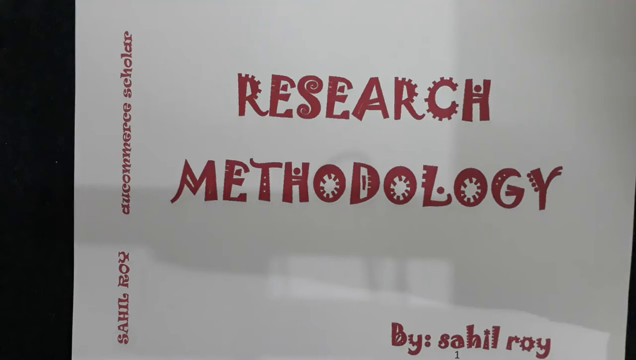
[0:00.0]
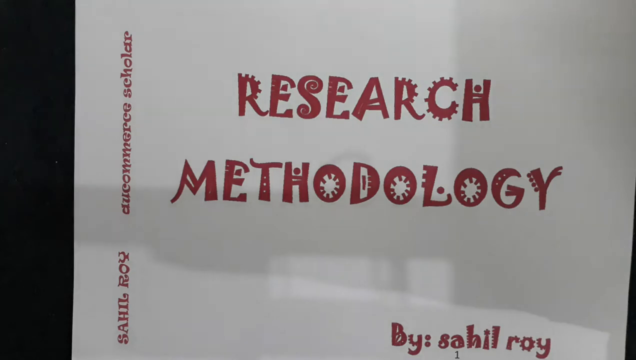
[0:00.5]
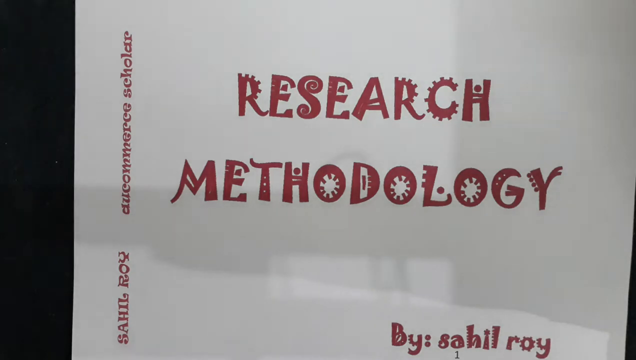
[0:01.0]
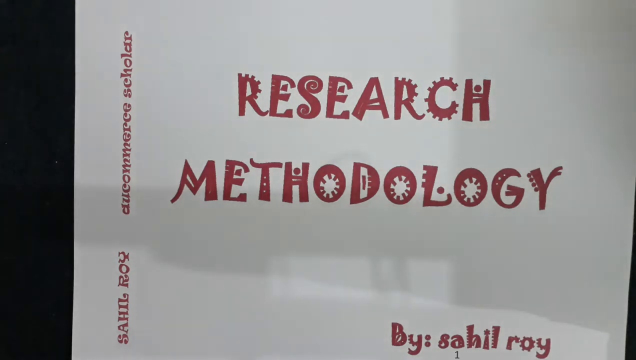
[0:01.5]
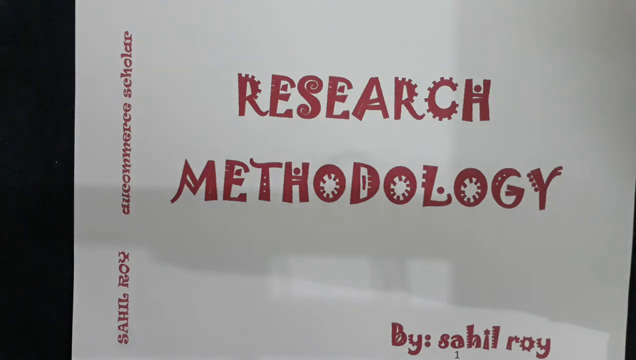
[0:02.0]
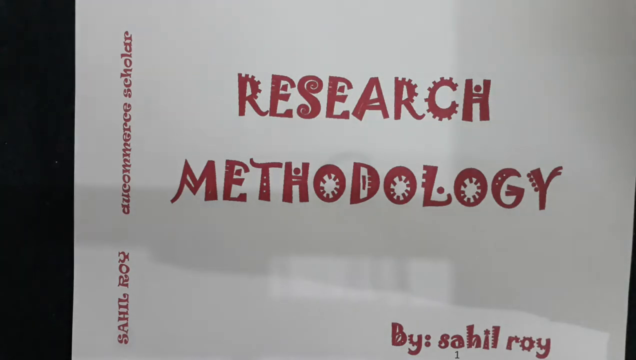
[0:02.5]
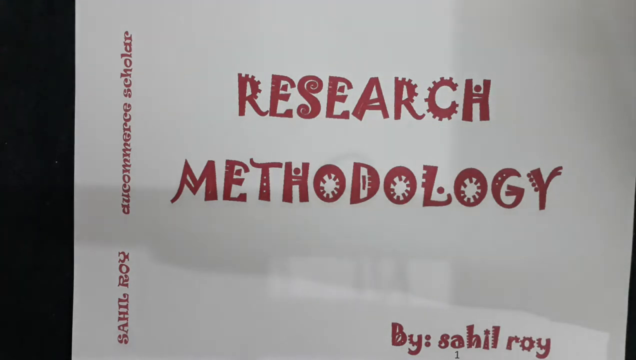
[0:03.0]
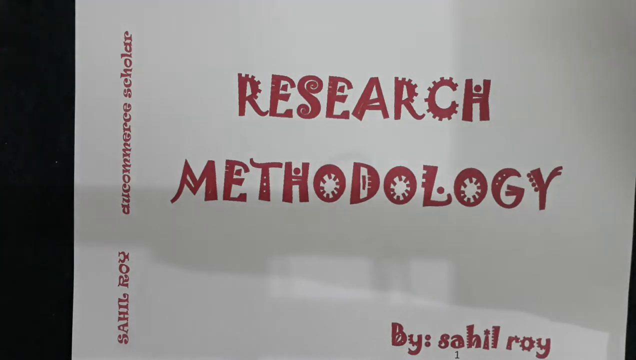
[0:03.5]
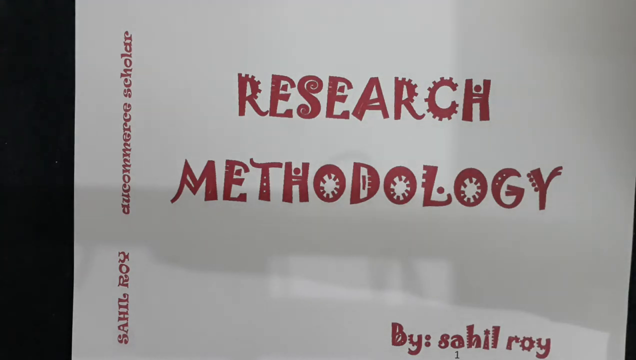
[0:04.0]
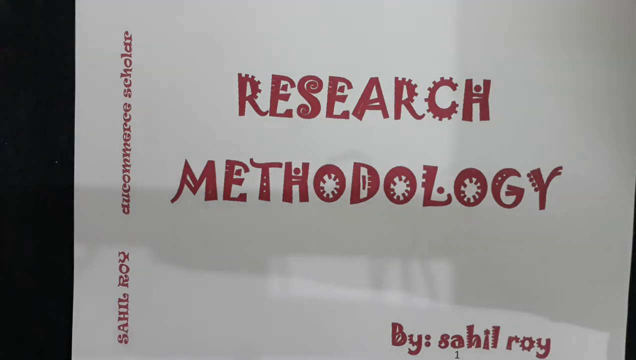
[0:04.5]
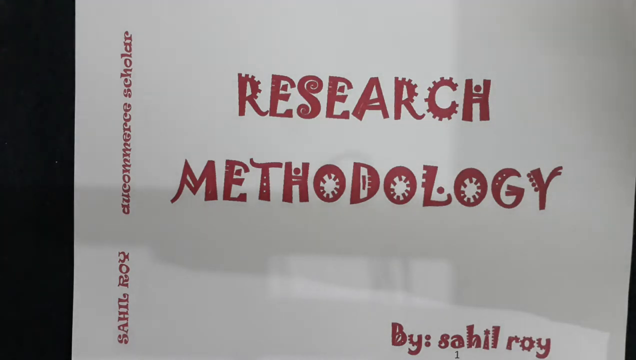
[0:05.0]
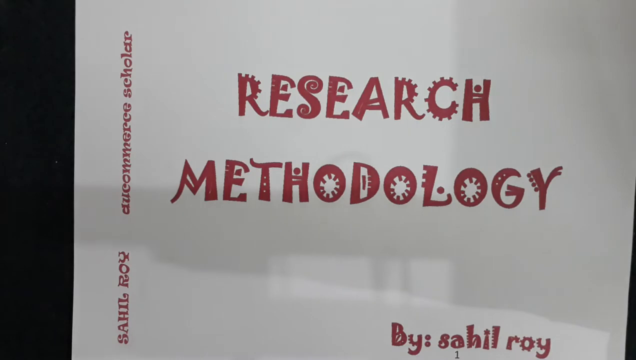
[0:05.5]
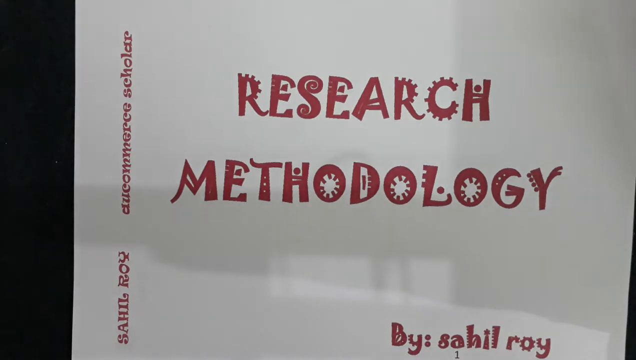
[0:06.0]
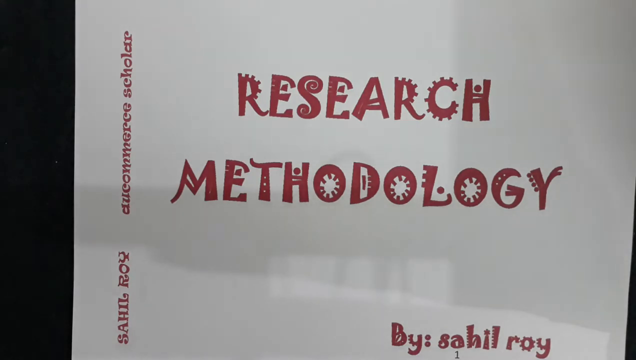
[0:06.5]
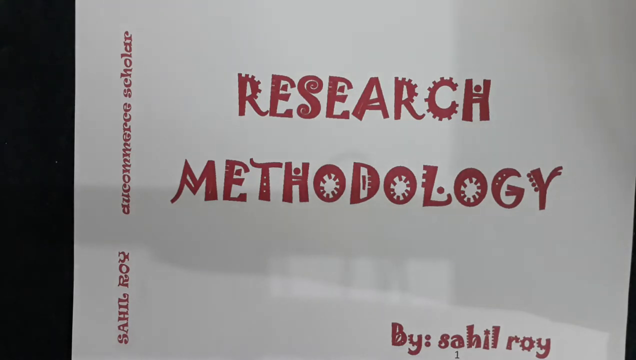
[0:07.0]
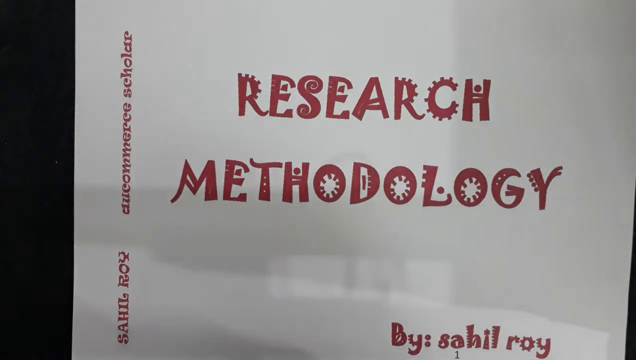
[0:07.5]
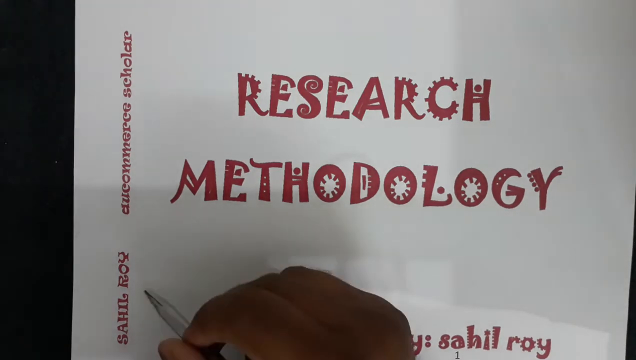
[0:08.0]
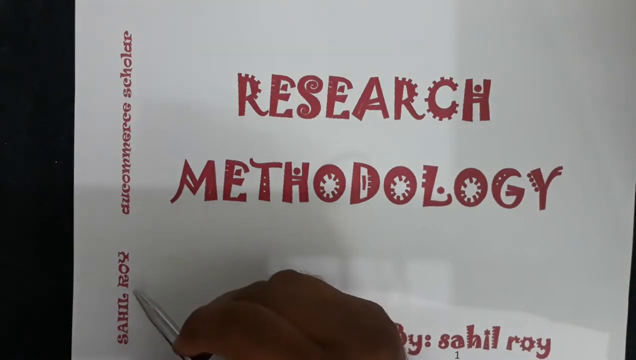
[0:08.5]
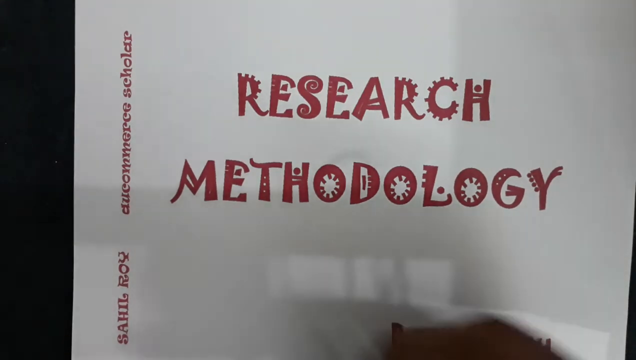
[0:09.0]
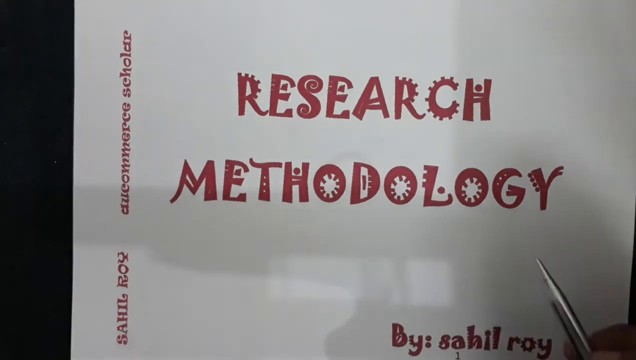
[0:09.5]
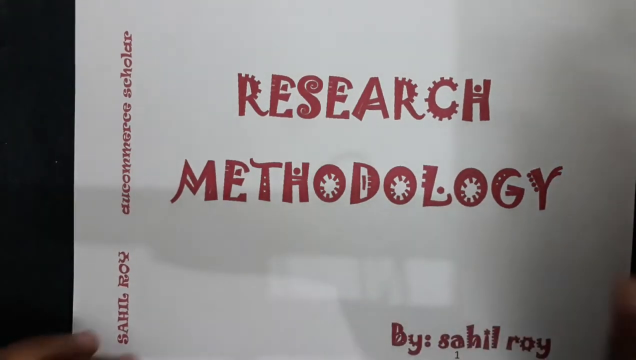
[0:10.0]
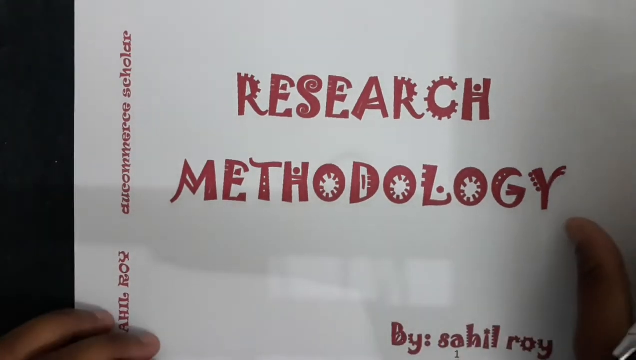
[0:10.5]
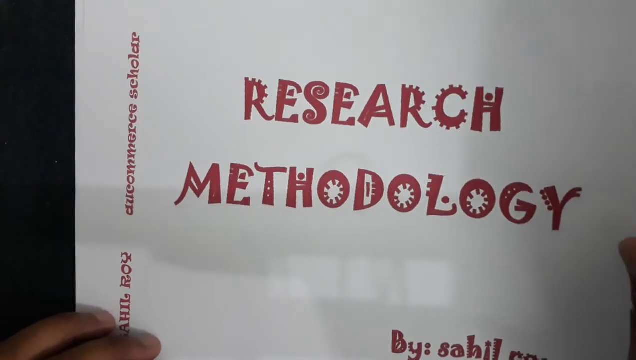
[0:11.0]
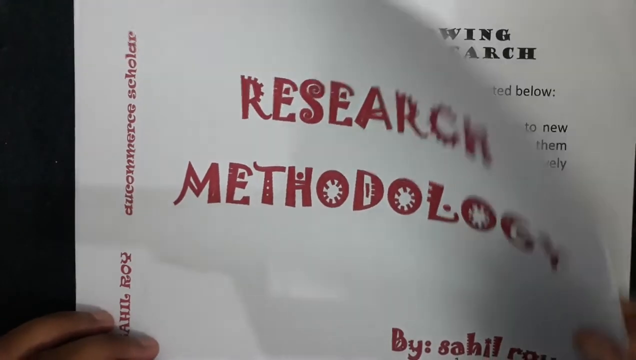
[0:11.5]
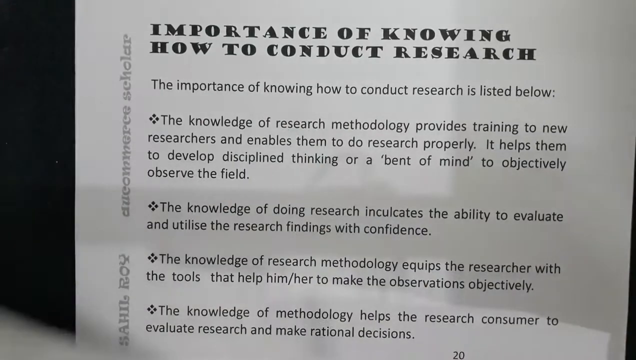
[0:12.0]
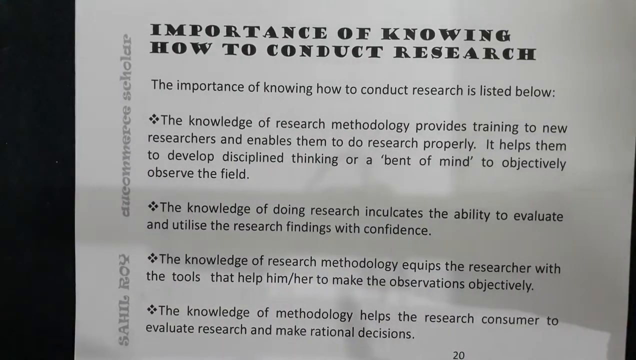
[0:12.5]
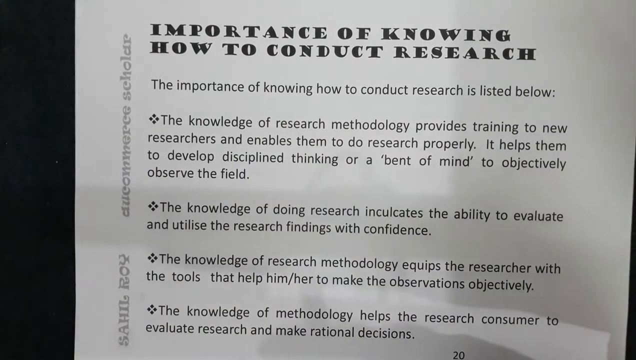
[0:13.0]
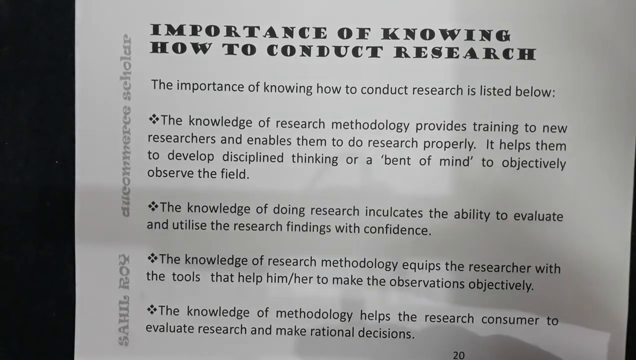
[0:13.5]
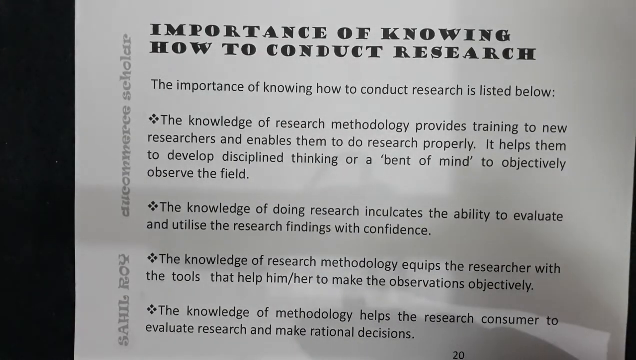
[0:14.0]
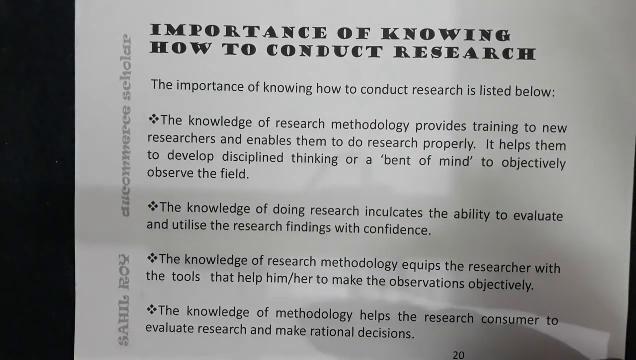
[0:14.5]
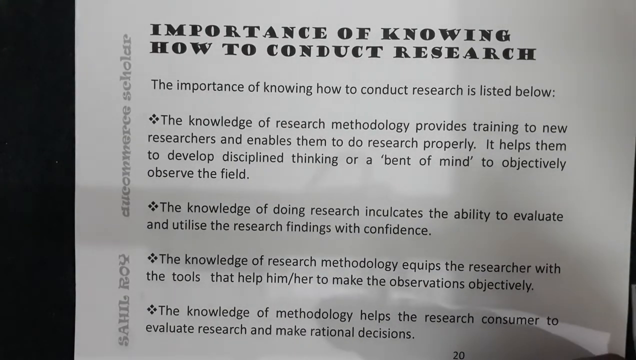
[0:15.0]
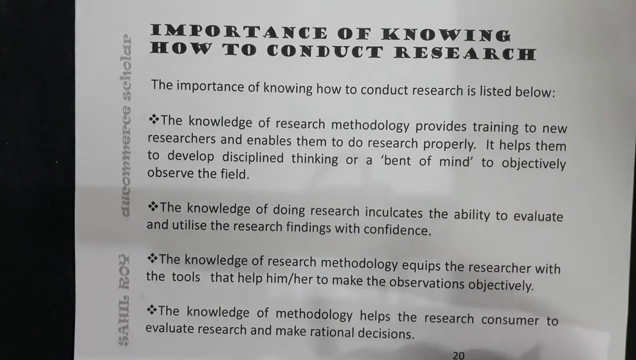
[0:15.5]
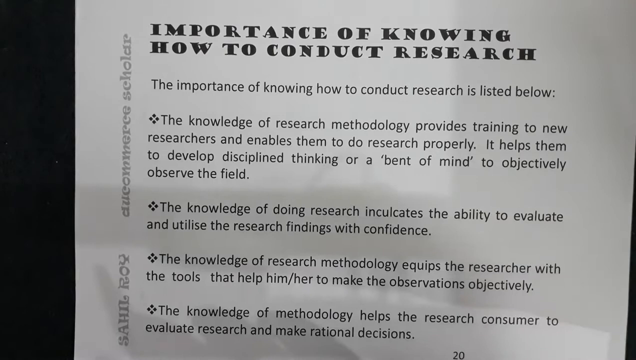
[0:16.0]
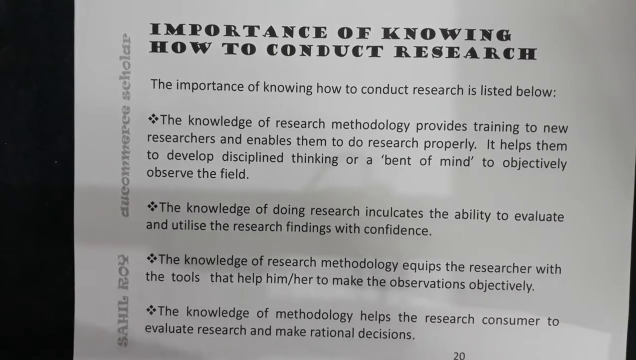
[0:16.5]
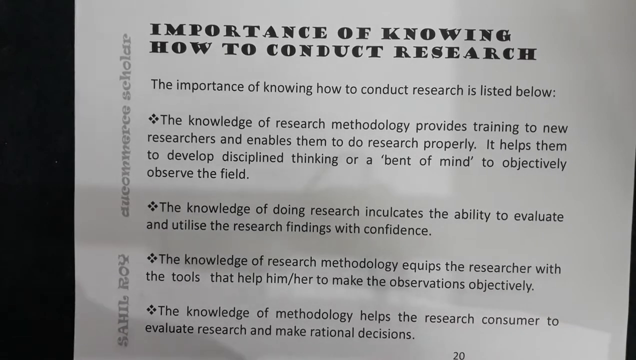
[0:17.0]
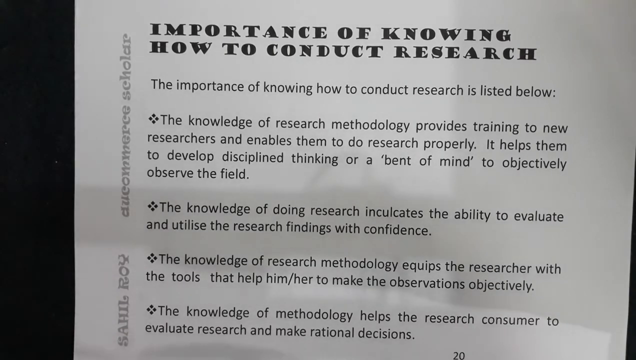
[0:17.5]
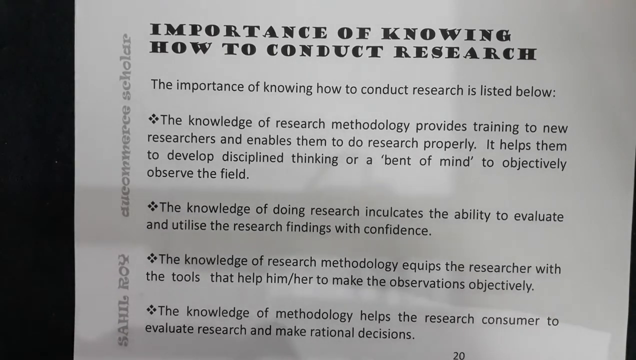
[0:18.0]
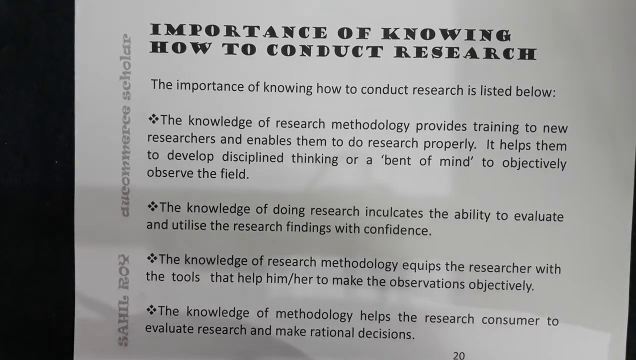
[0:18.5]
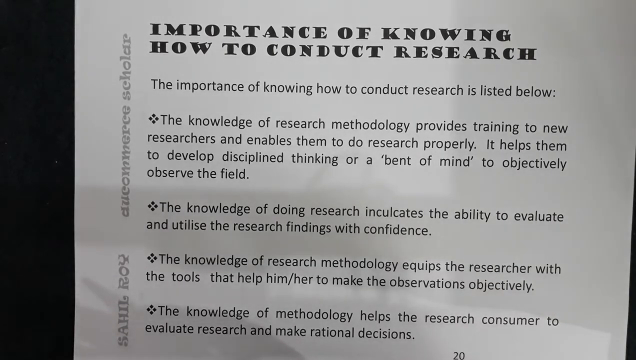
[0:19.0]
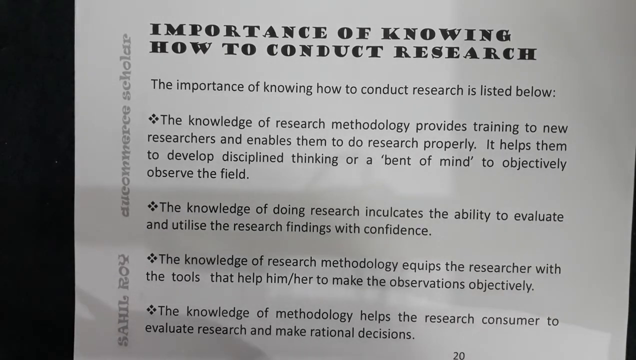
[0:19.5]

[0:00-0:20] The title "research methodology" appears in a weird font, in red on a white background, by Salil Roy. A person with a pen and a piece of paper flips the page. The page shows text that says "importance of knowing how to conduct research," followed by "The importance of knowing how to conduct research is listed below. The knowledge of the research methodology provides training to new researchers, enables them to do research properly, and helps them to develop a disciplined thinking or a bent mind to objectively observe the field." It also reads "The knowledge of research methodology equips the researcher with the tools to help him or her to make observations objectively." It appears to be a piece of paper with the text written or typed in black ink.